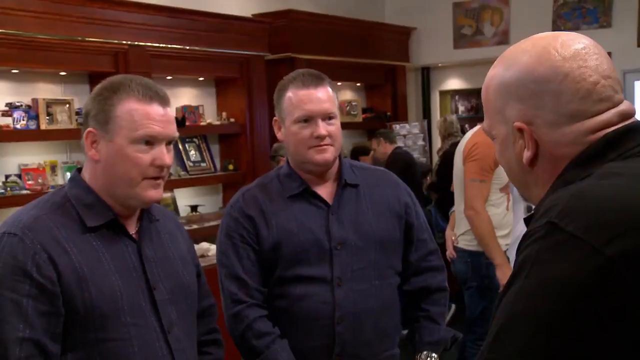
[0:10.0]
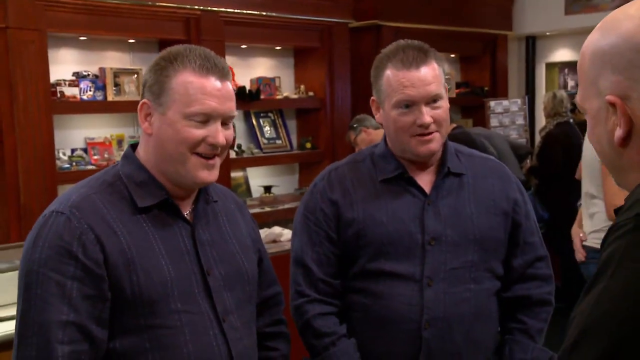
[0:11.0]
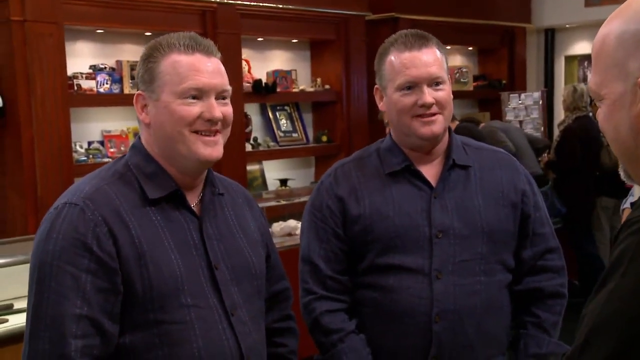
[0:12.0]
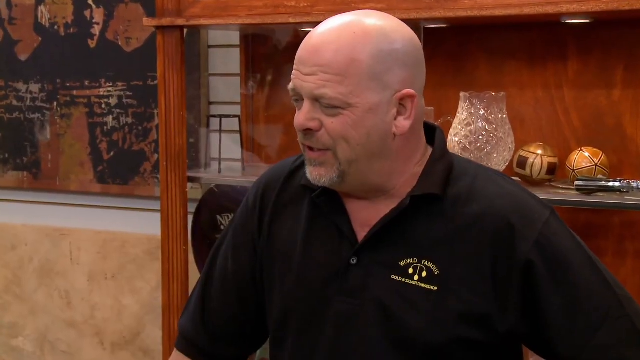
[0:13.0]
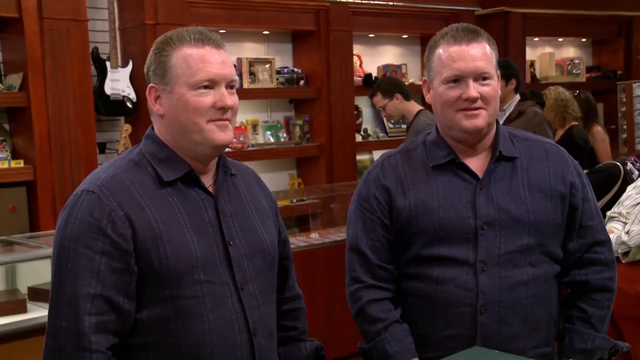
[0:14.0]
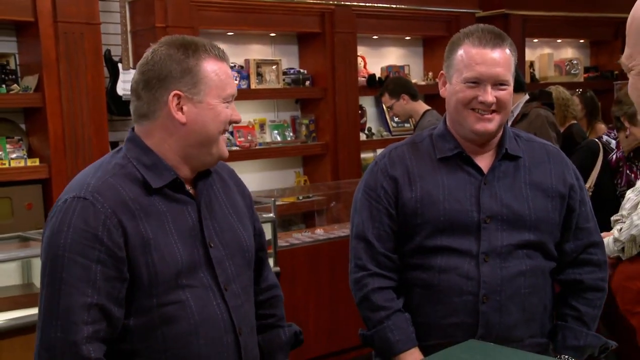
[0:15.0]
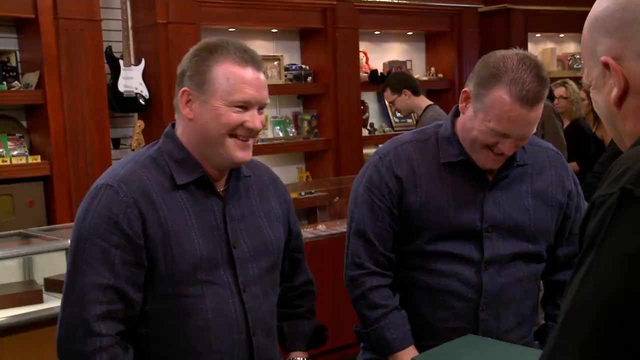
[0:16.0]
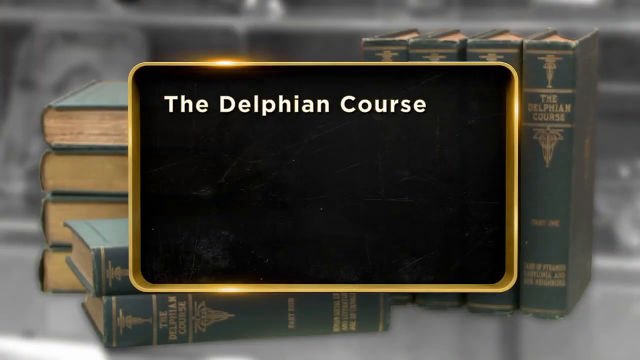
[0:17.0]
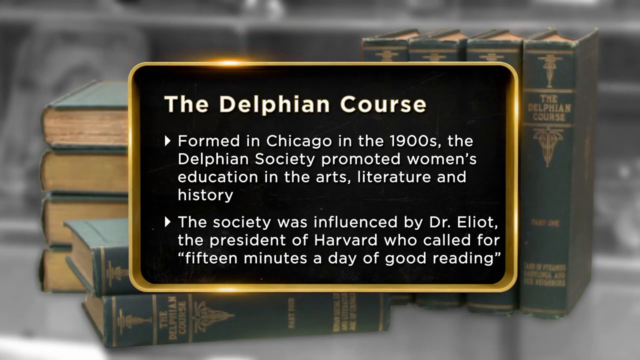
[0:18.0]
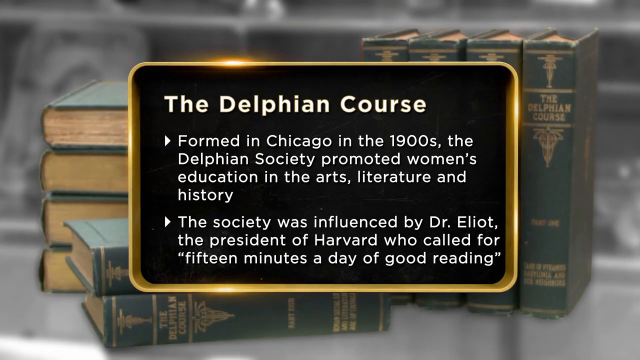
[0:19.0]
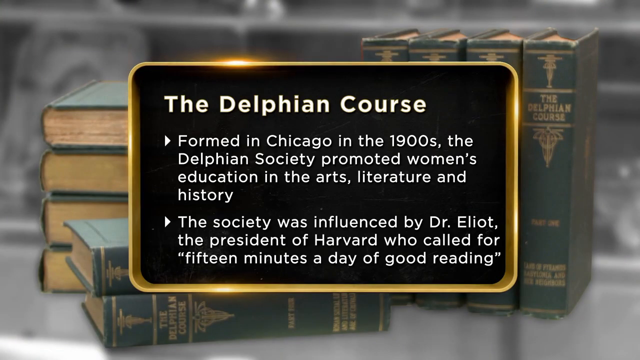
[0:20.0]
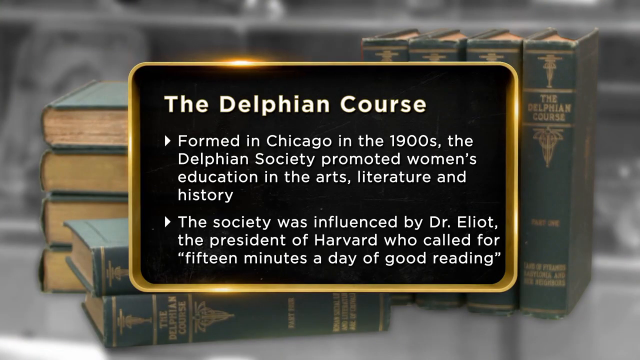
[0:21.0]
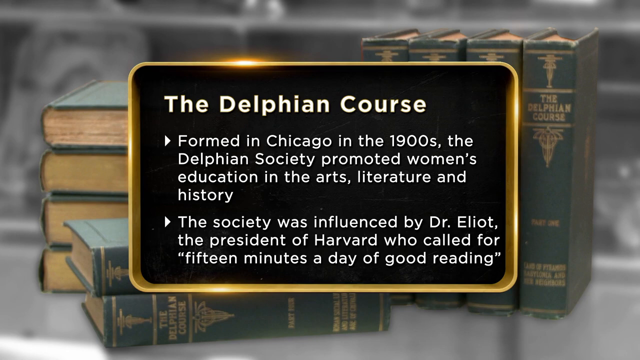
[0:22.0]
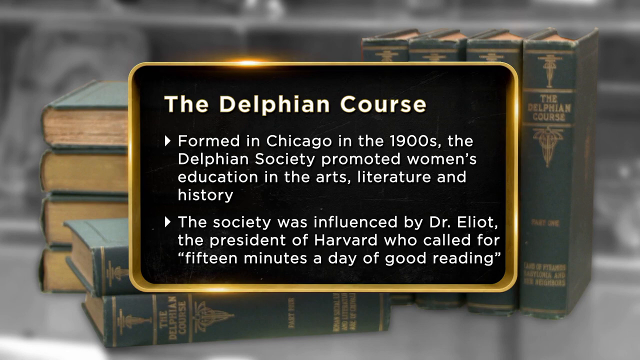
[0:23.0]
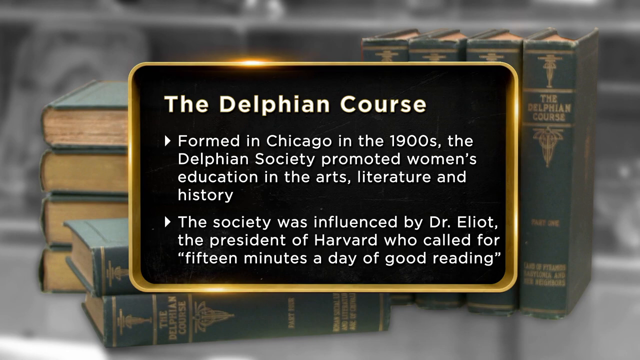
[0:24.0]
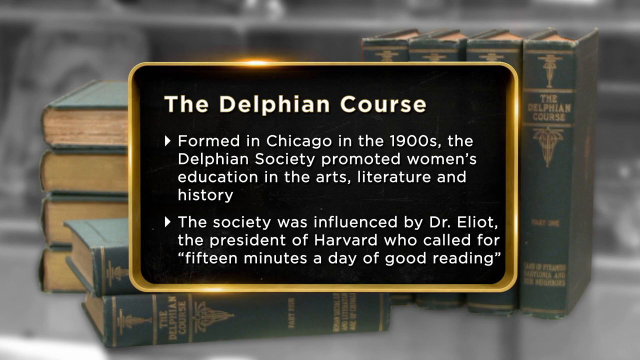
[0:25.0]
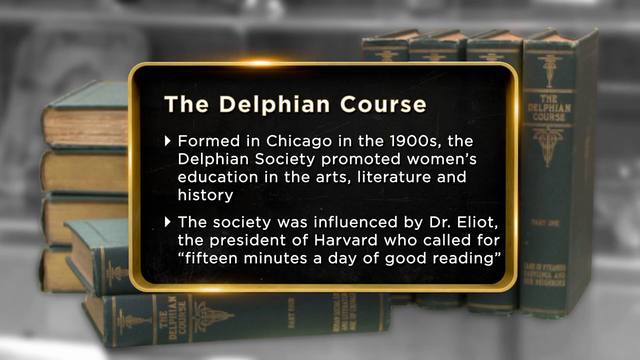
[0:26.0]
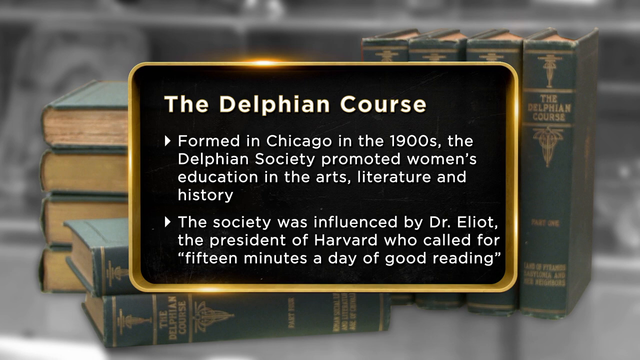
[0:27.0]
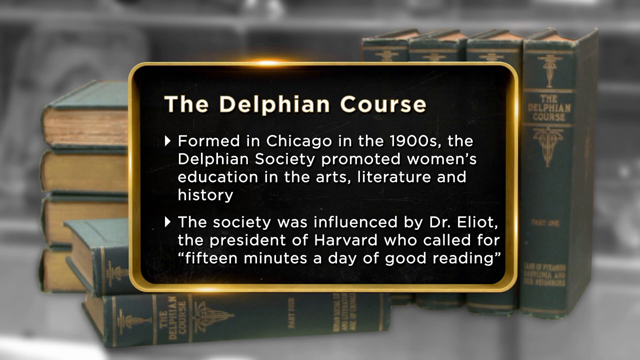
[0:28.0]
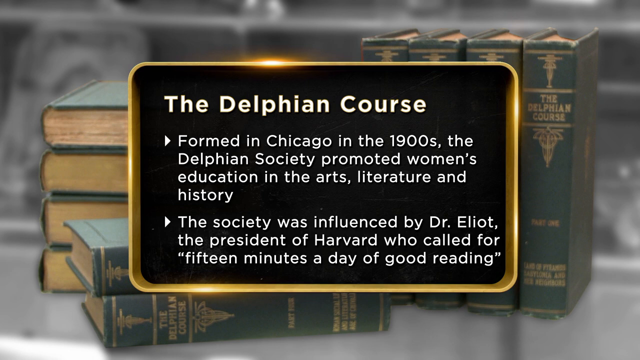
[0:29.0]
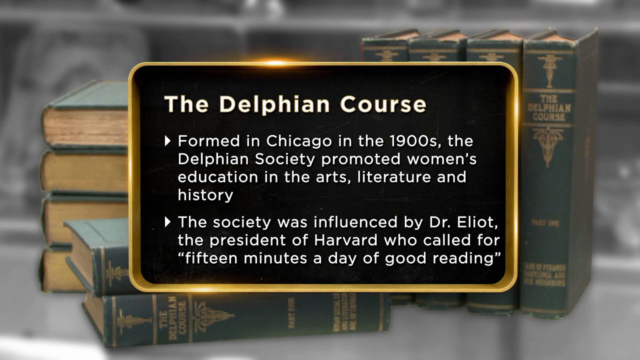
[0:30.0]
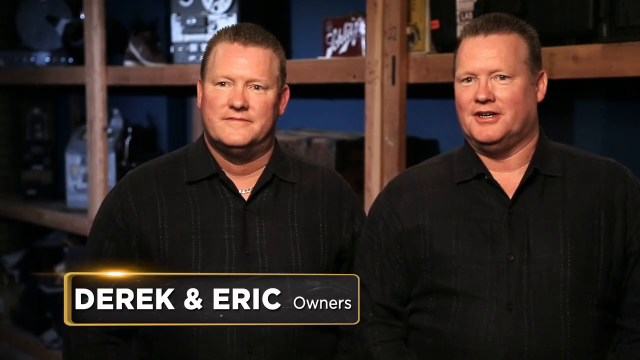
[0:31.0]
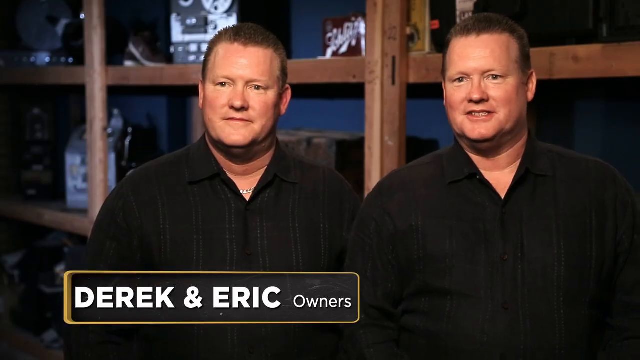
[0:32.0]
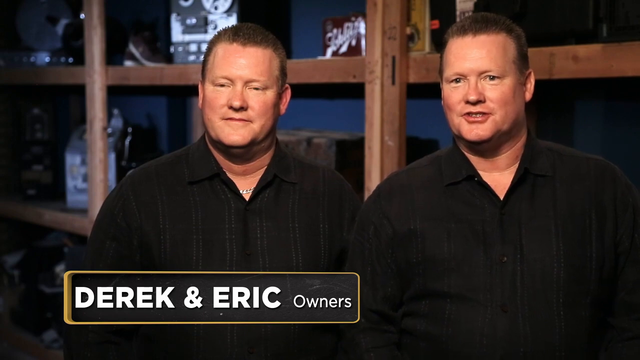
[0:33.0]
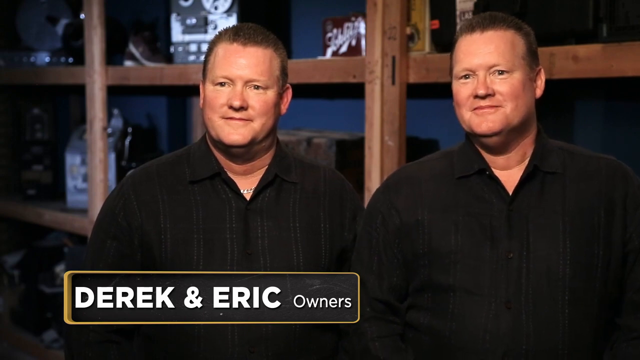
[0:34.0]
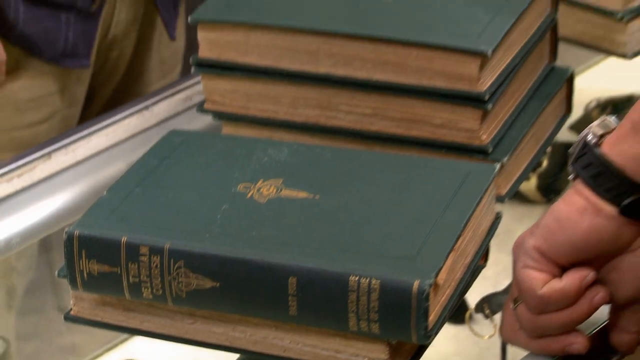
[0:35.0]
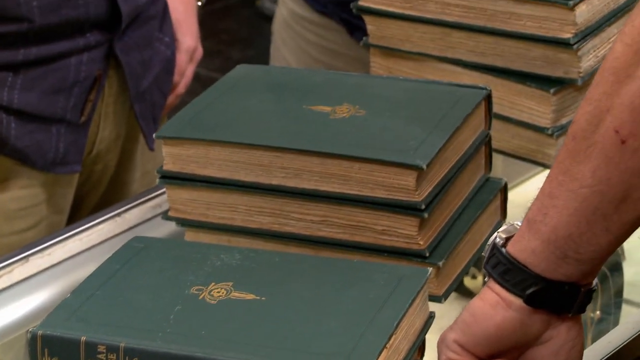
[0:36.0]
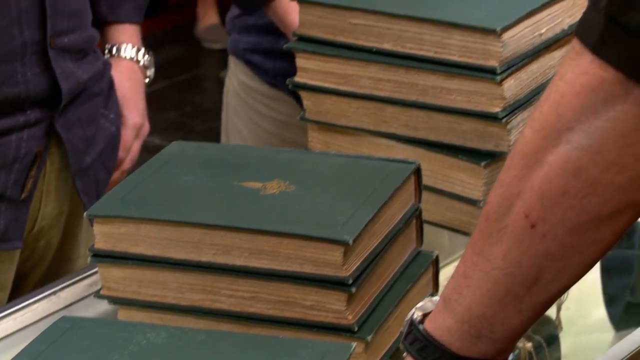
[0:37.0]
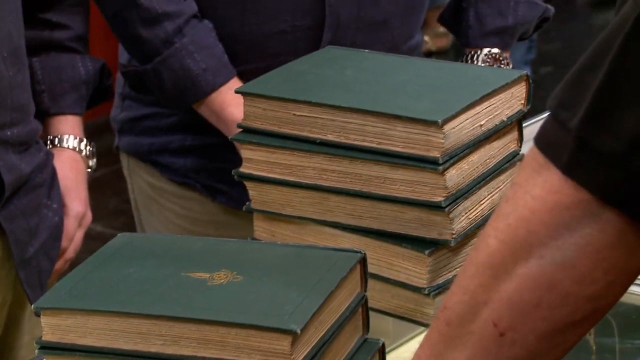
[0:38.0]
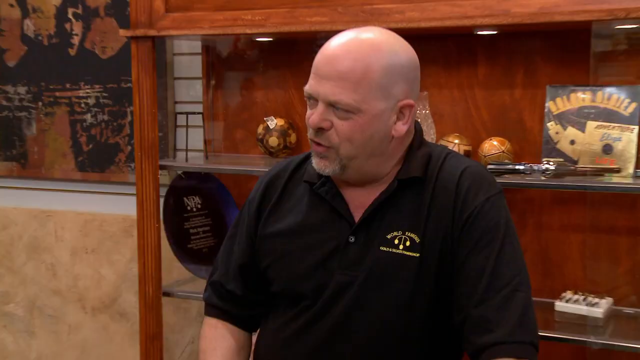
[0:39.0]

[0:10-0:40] The two men in blue shirts are at the counter talking with the bald man behind it in the short-sleeved black shirt; they are all sort of laughing and seem jovial, looking back and forth at each other. The shop has glass cabinets behind and in front of them and lots of items around. The green books the men carried then appear in the background of a screen, with text in front of them reading: "The Delphian Course. Formed in Chicago in the 1900s, the Delphian Society promoted women's education in the arts, literature and history. The Society was influenced by Dr Elliot, the President of Harvard who called for 15 minutes a day of good reading." Next, the two men, identified by on-screen text as Derek and Eric and as owners, talk in a different place from the shop, with wooden storage space behind them holding lots of objects. The video returns to the shop, where the Delphian Course books are on the counter and the man behind the counter is talking.